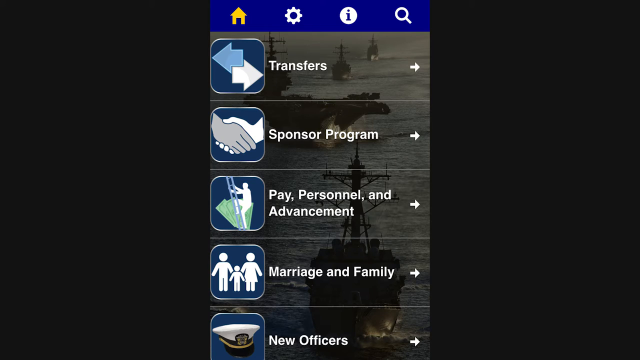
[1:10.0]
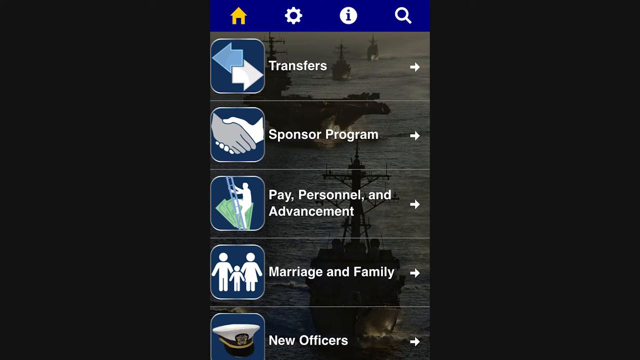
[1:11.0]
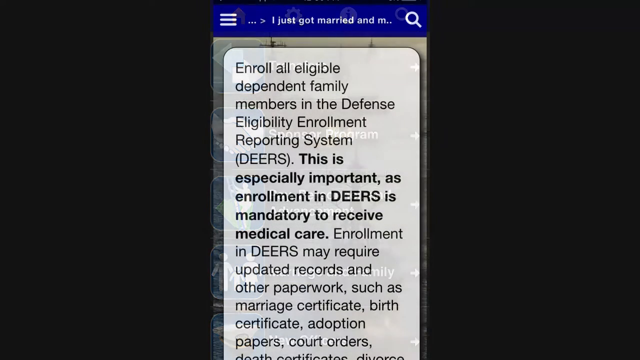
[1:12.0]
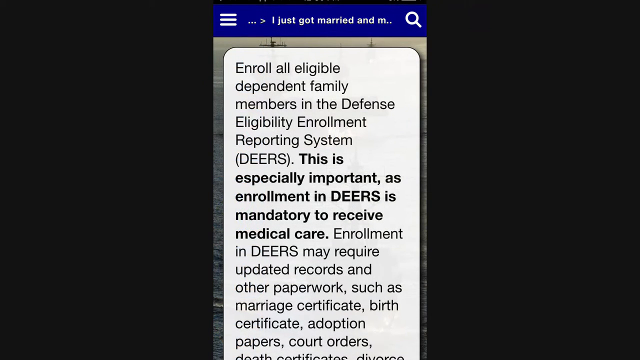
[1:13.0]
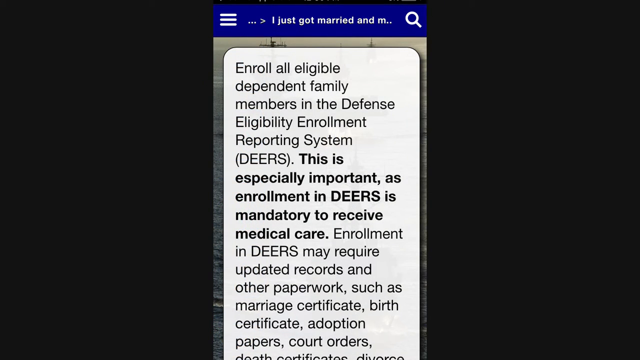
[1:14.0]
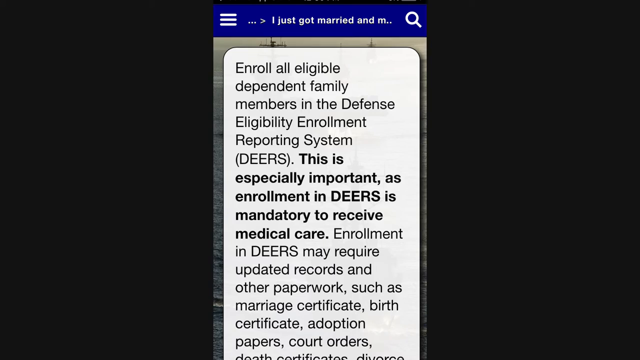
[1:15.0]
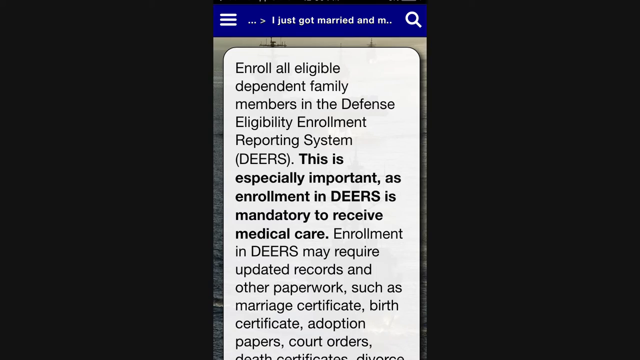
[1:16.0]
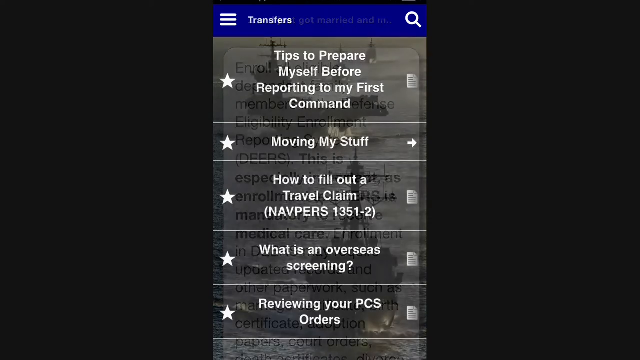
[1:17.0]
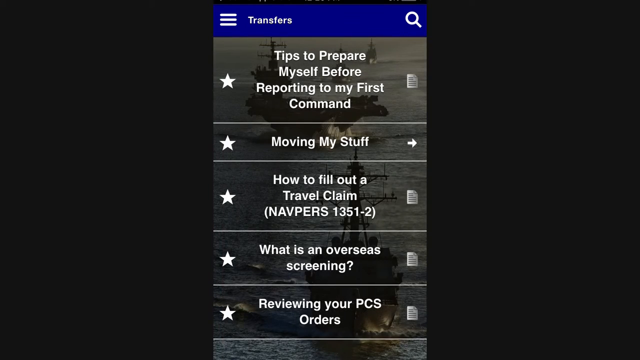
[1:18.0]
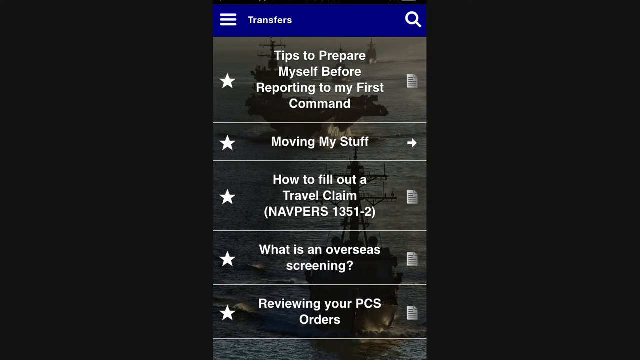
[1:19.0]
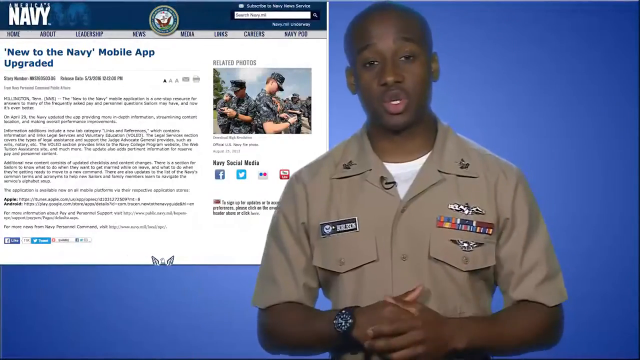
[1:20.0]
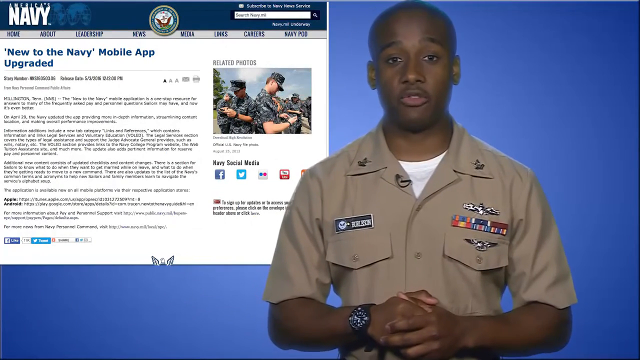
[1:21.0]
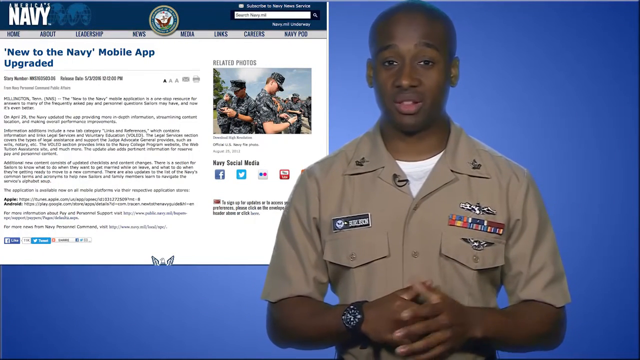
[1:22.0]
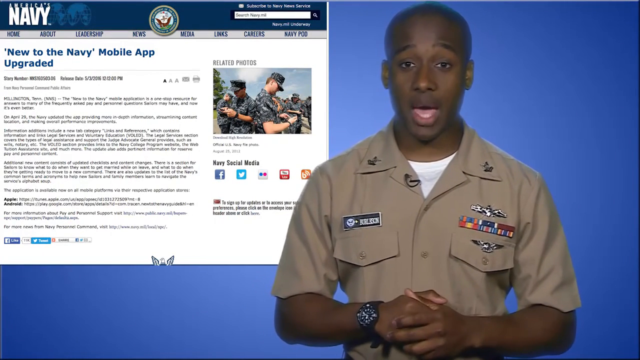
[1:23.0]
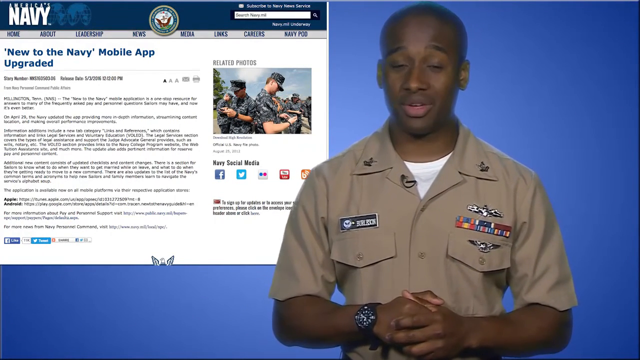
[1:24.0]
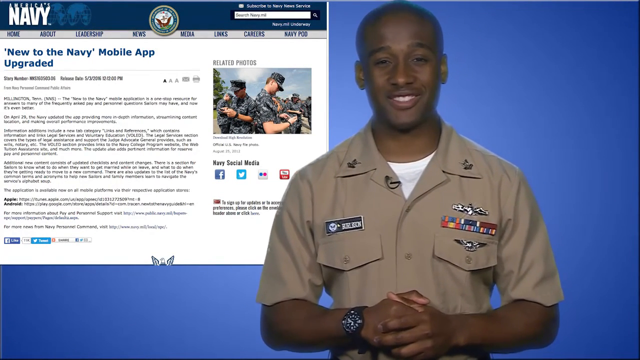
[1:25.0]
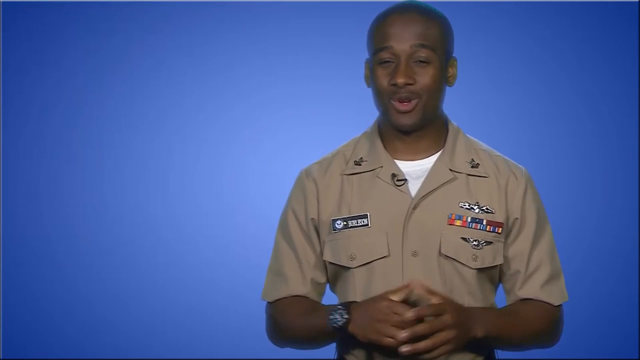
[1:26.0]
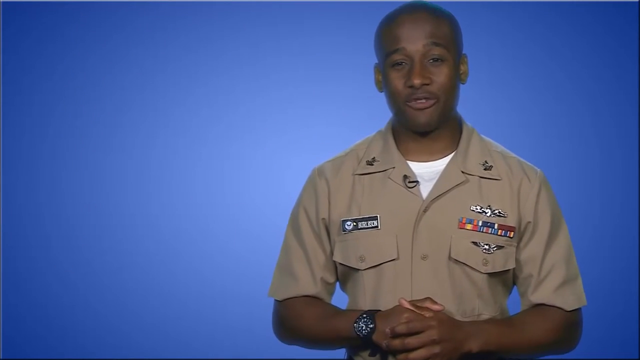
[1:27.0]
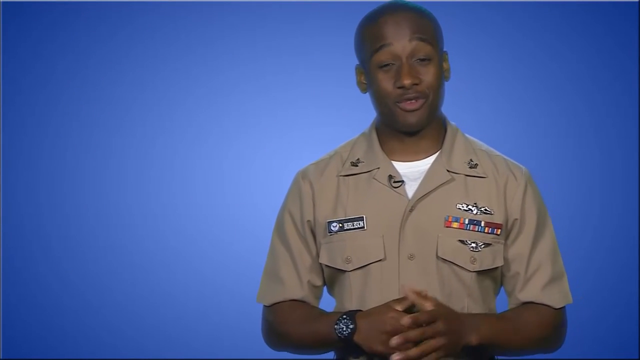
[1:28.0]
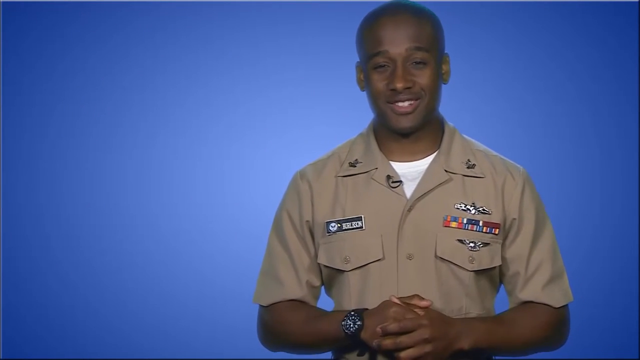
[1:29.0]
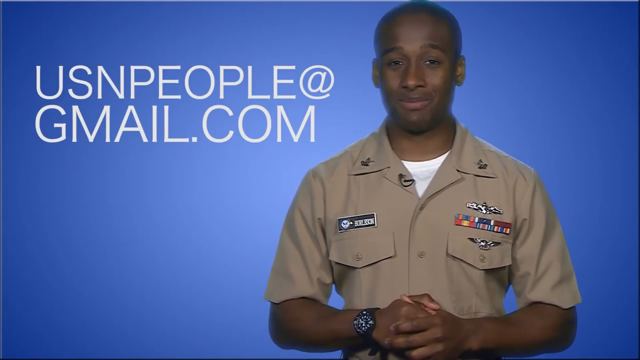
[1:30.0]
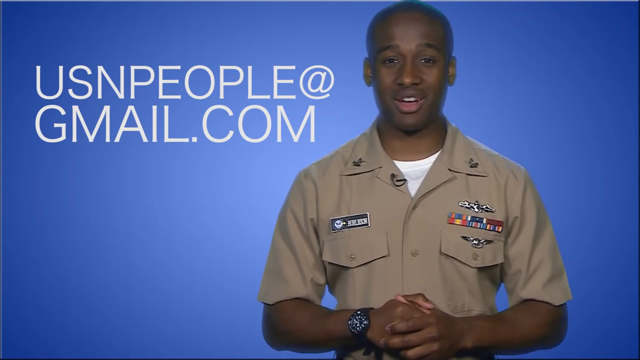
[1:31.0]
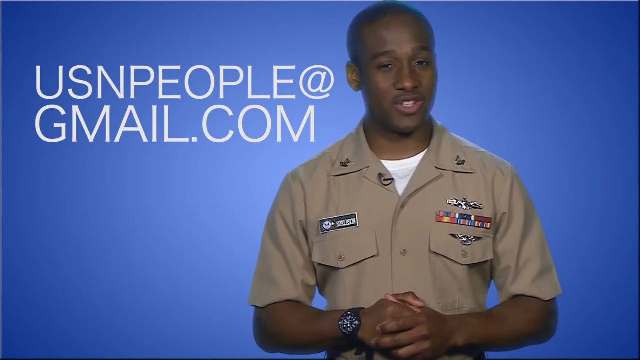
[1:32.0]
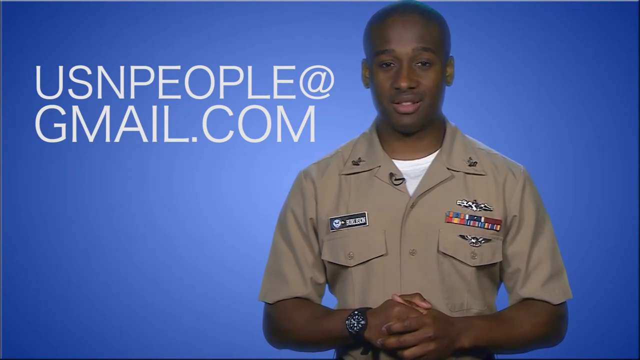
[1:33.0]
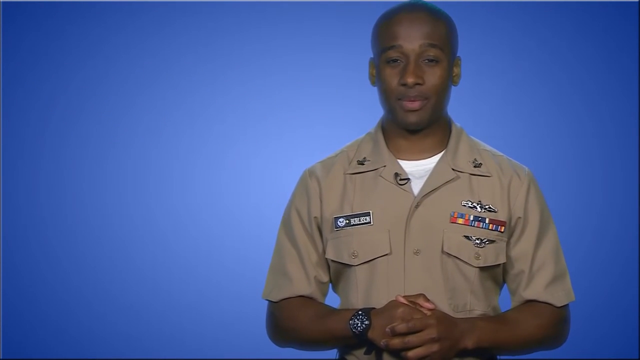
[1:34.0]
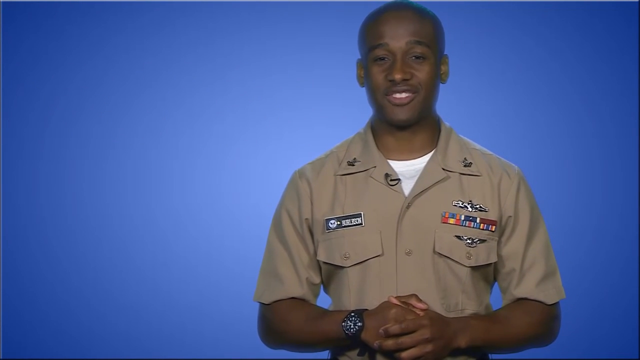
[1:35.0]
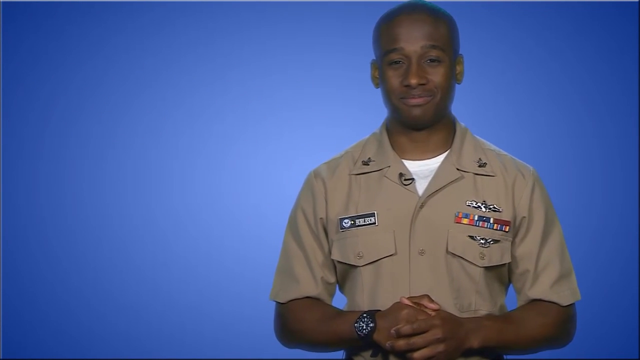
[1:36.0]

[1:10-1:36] The scene begins with an all-black background and goes on to show parts of the US Navy website. A rectangular box is in the center of the screen. At the top of the box is a long electric blue strip with four items on it: a yellow house symbol, a navigation wheel, the letter I, and a white magnifying glass. Below this are four horizontal columns. The first reads "transfers," with a graphic to its left of arrows pointing left and right. The next reads "sponsor program," with a graphic to its left of a gray hand and a white hand shaking. The third reads "Pay, Personnel, and Advancement," with a graphic to its left of a man walking up a ladder over a bridge. The fourth reads "Marriage and Family," with a graphic to its left of the typical male, female and child family figure in white.